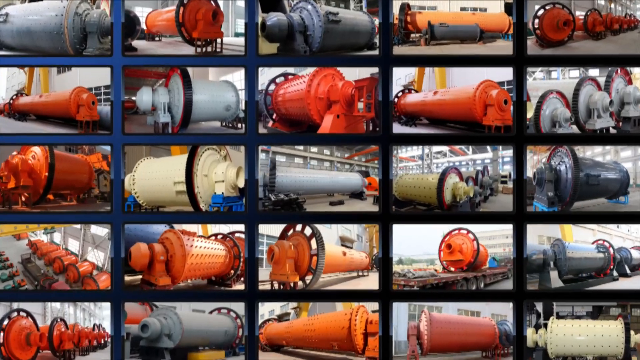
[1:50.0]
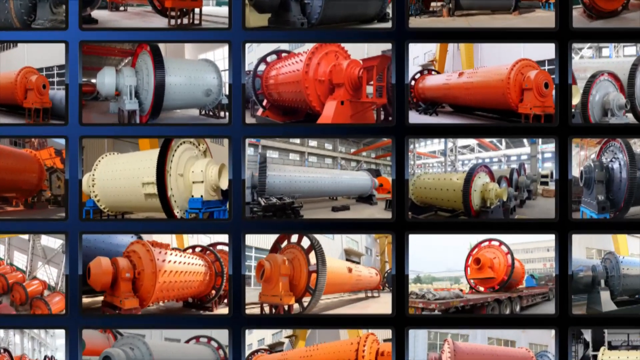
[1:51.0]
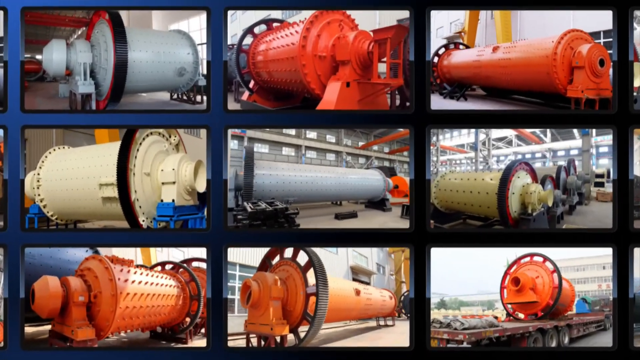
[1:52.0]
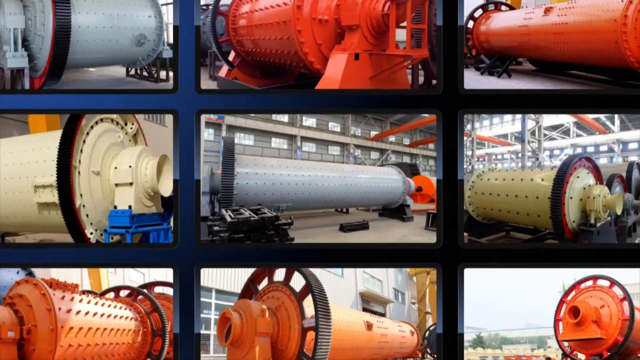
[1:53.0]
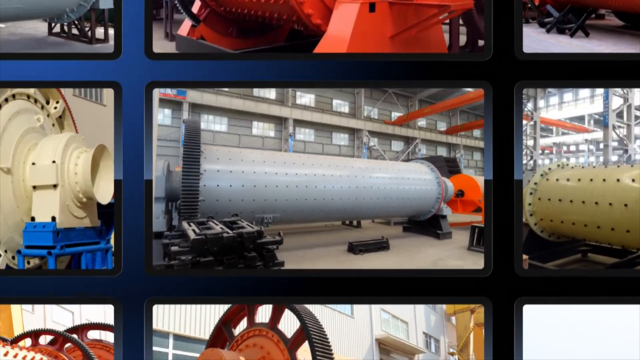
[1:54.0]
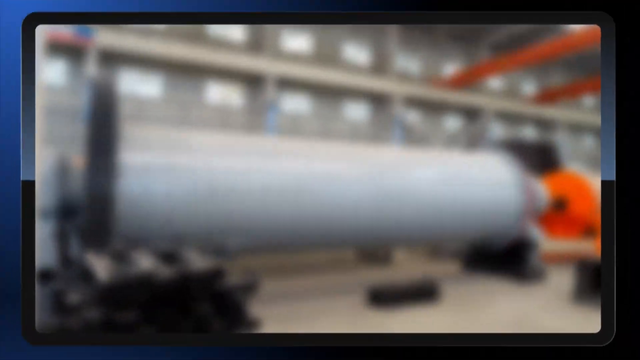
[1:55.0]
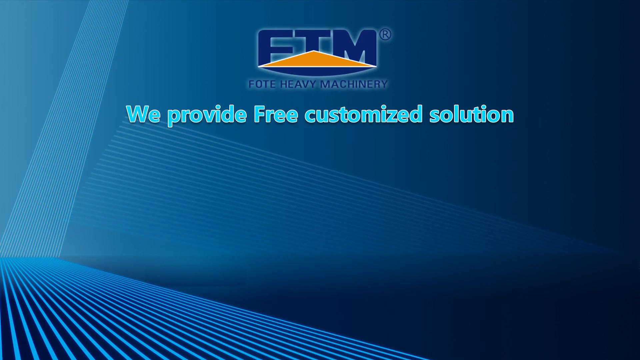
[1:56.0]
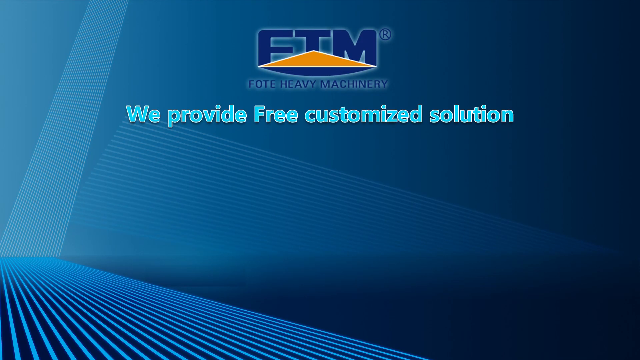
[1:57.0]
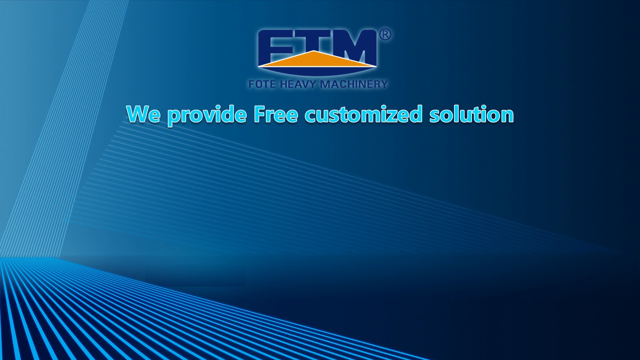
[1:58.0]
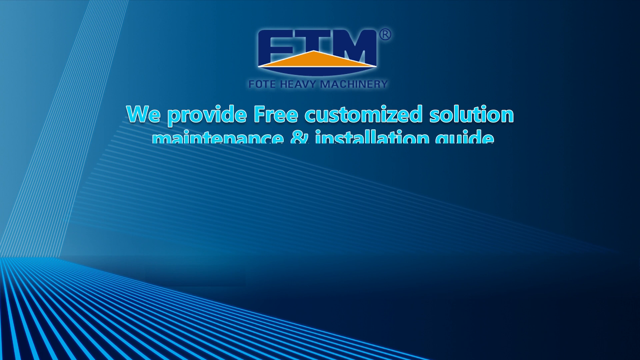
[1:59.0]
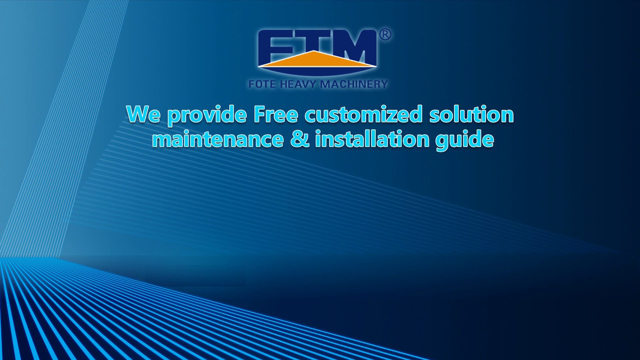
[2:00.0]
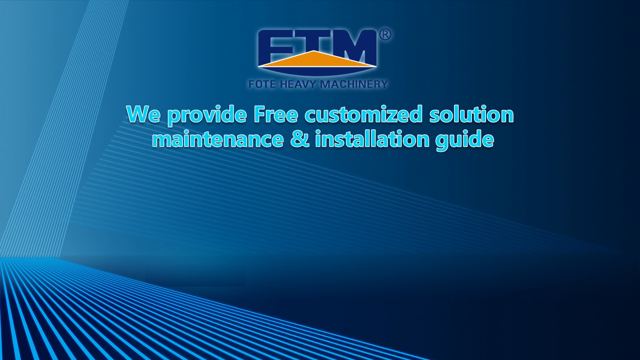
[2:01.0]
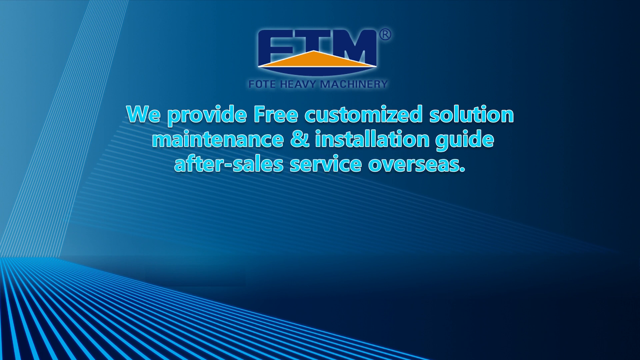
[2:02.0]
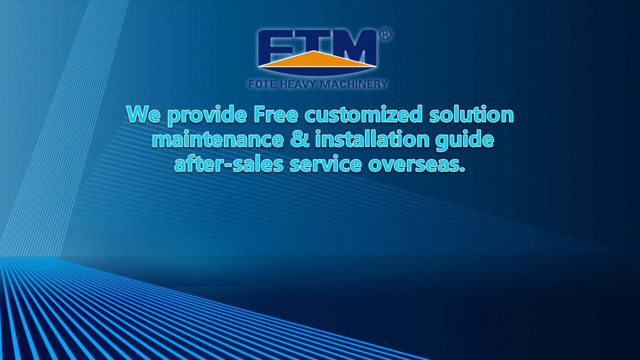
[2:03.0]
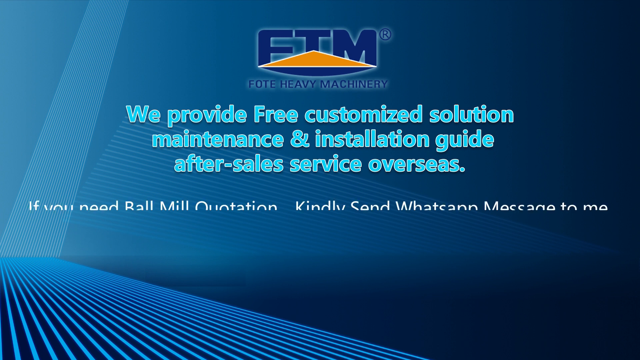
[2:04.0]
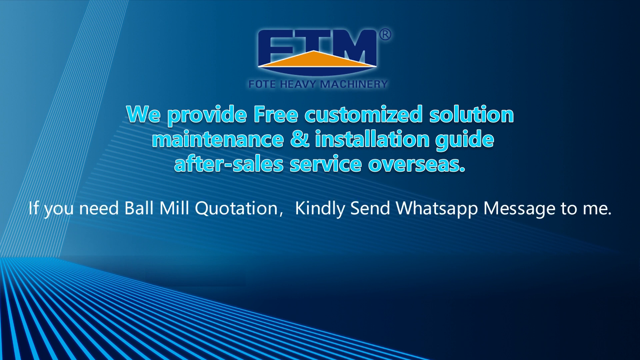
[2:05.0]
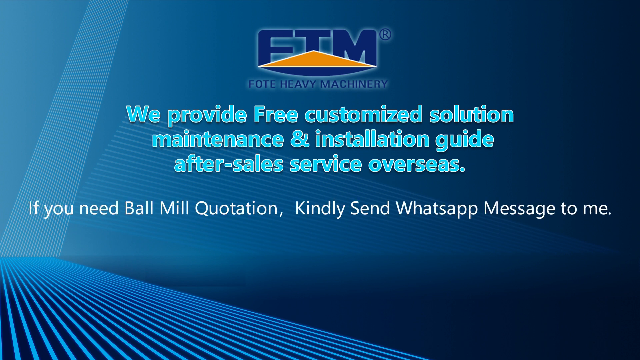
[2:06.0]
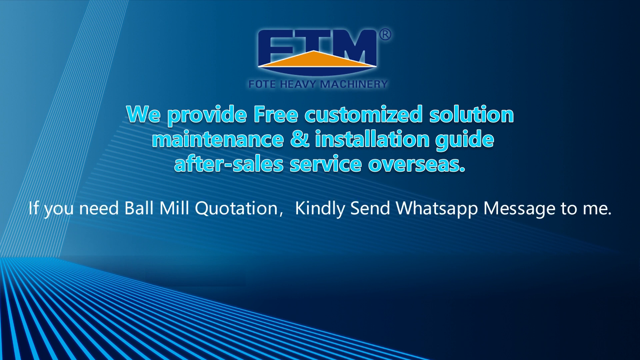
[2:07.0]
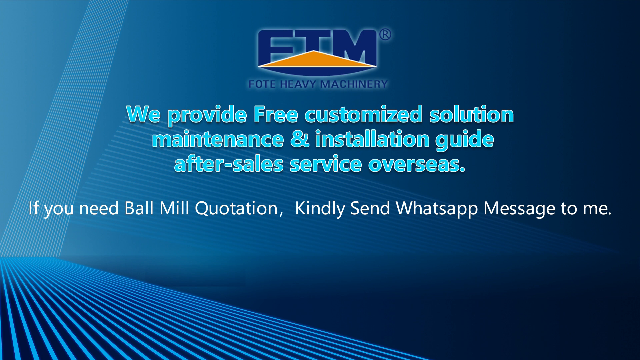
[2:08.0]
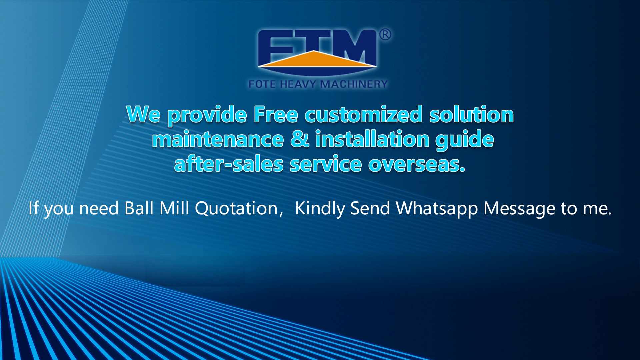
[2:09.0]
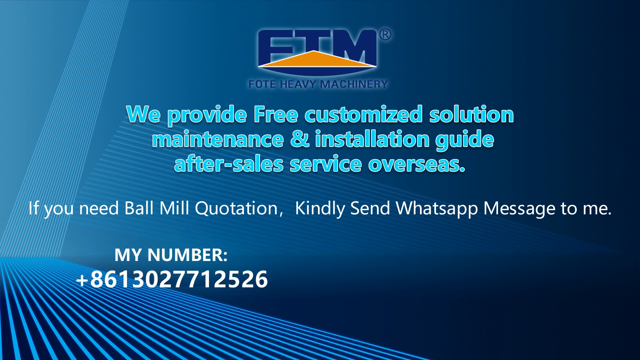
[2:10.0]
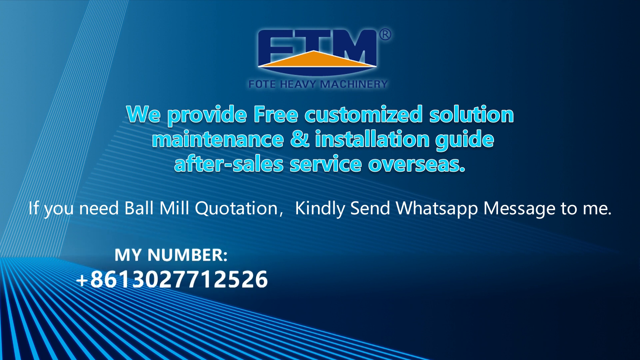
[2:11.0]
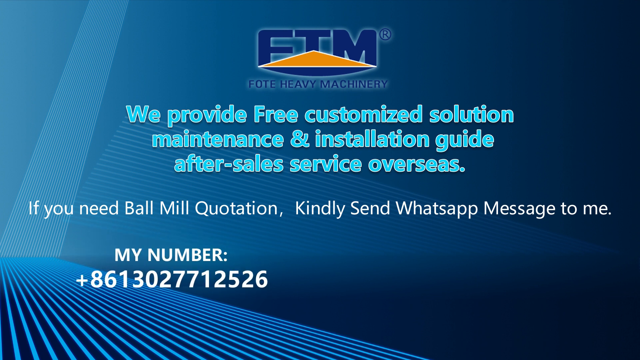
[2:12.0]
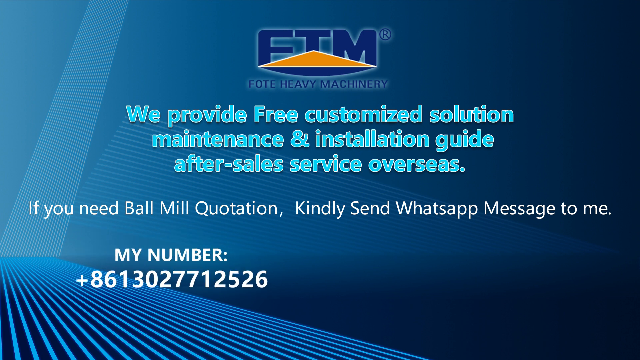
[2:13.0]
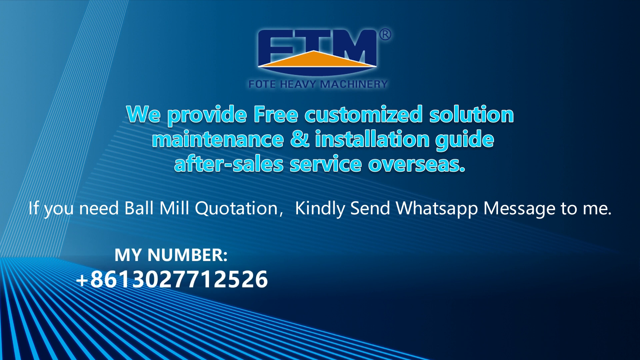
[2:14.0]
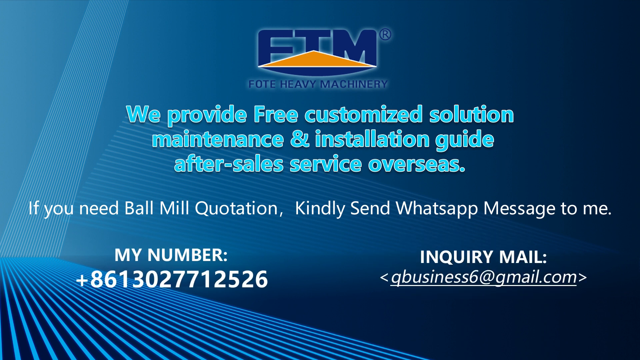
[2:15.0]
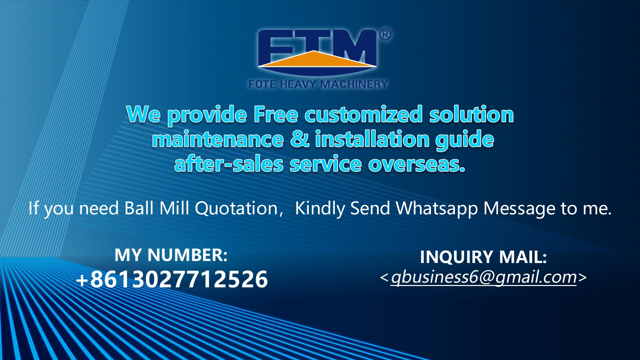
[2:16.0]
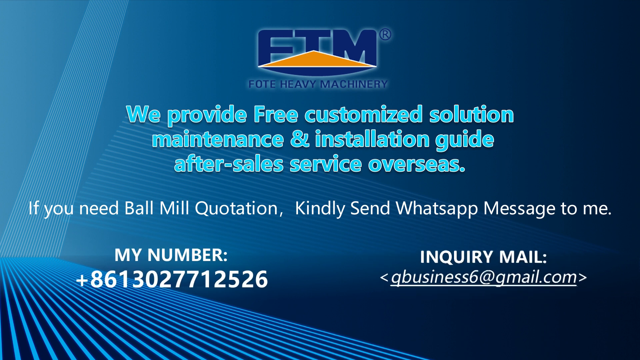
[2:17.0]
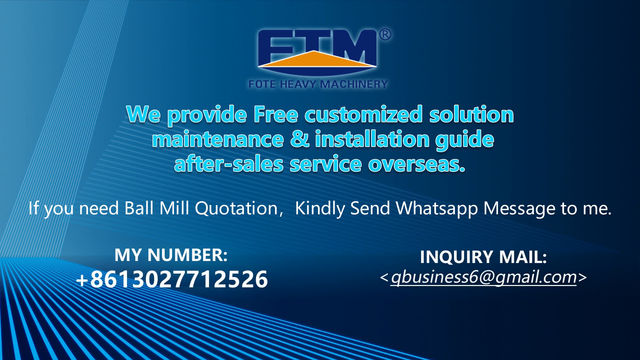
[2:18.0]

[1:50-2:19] After the rectangular grid of ball mill images, the video zooms into one of the images, the one in the center right, showing a gray ball mill; it is kind of out of focus and stays out of focus as the video zooms in. The blue background with line designs returns. At the top of the screen is a logo reading "FTM", with "Fote Heavy Machinery" underneath, and below that blue text reading "we provide free customised solution, maintenance and installation guide, after-sales service overseas". Contact information follows in smaller white font: "if you need ball mill quotation, kindly send WhatsApp message to me"; the blue text above is a bit bolder. Underneath, on the left, are the words "my number" with a Chinese WhatsApp number, and on the right "inquiry mail" with an underlined email address set in kind of triangular brackets on either side, reading "qbusiness6@gmail.com". The video ends there.